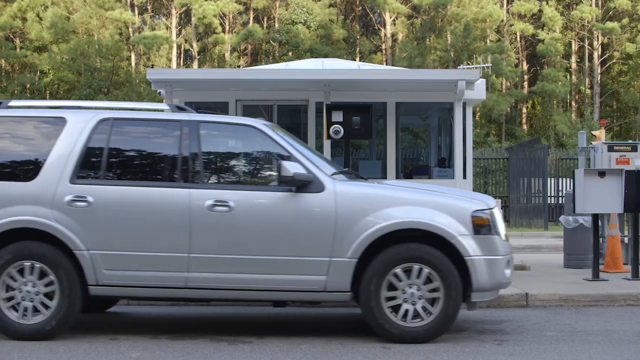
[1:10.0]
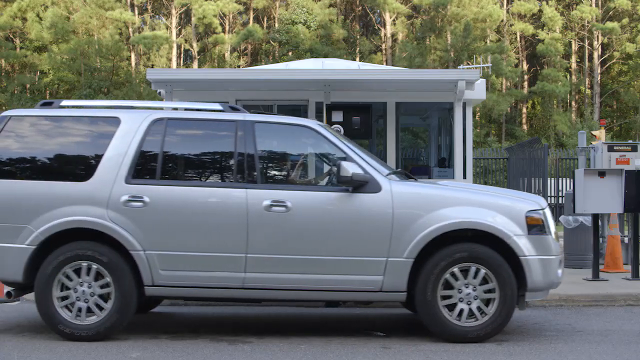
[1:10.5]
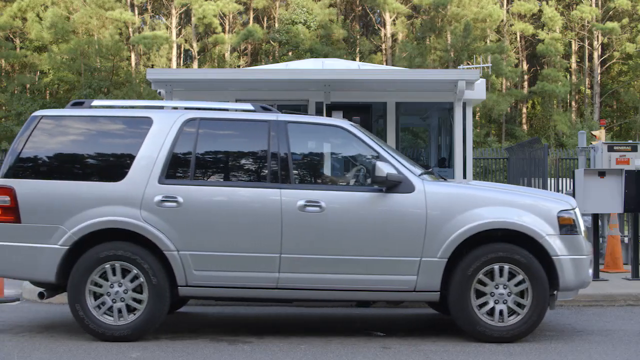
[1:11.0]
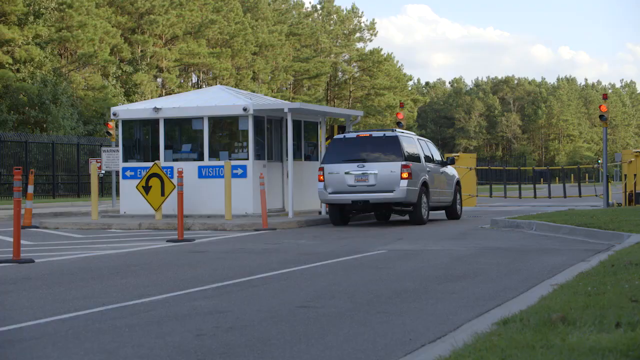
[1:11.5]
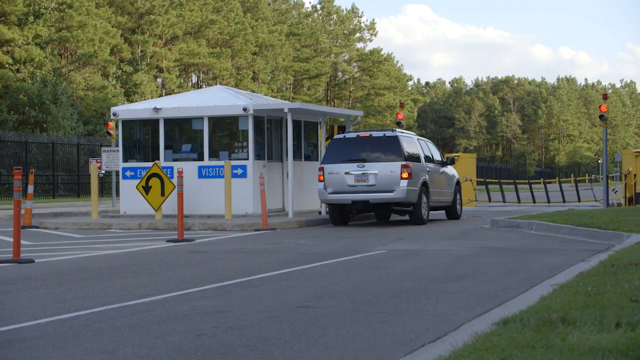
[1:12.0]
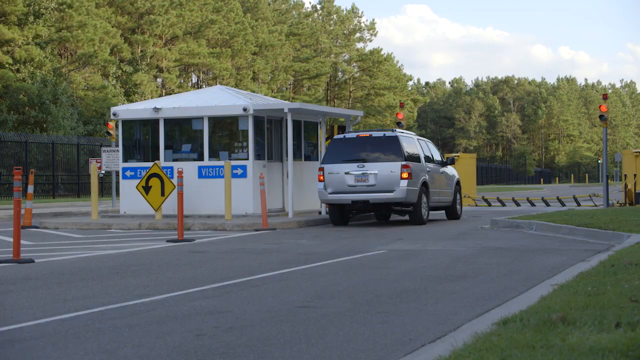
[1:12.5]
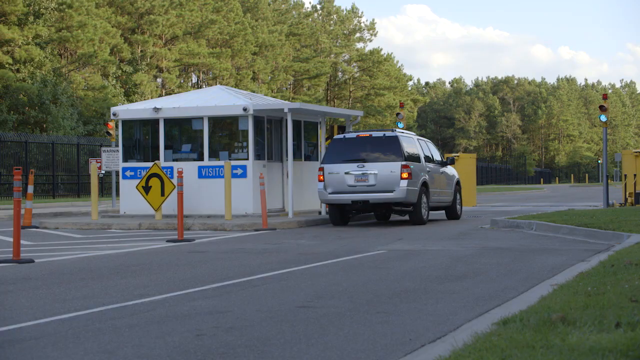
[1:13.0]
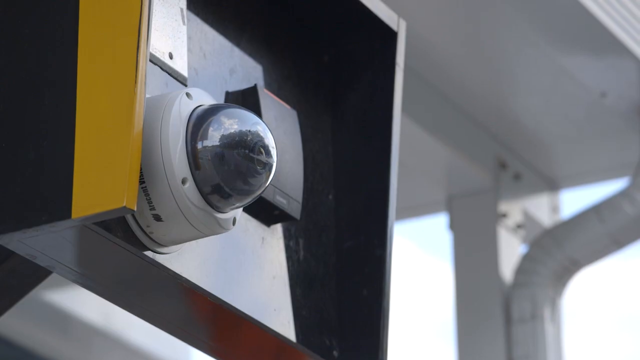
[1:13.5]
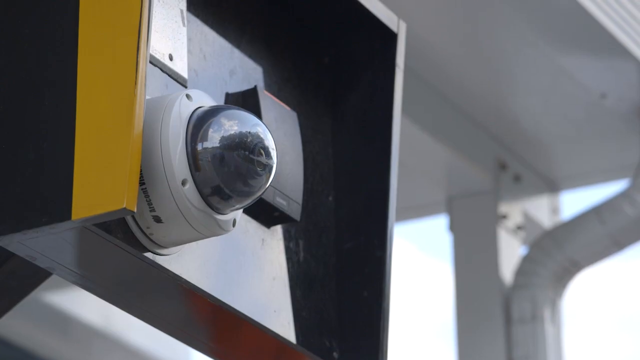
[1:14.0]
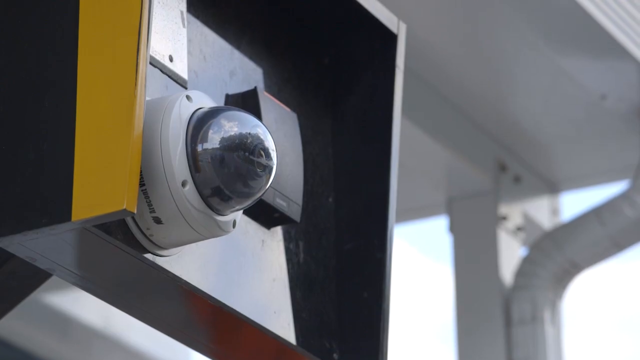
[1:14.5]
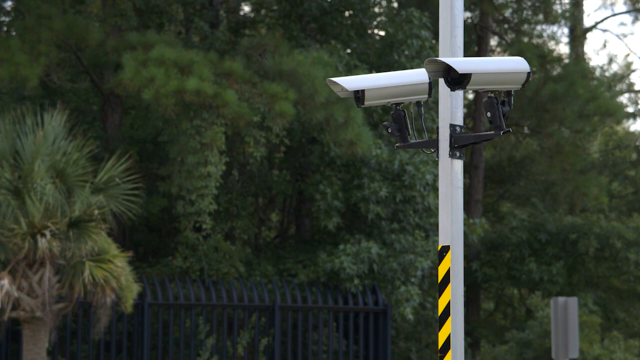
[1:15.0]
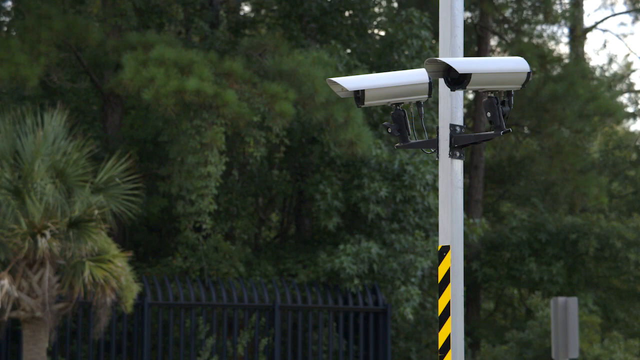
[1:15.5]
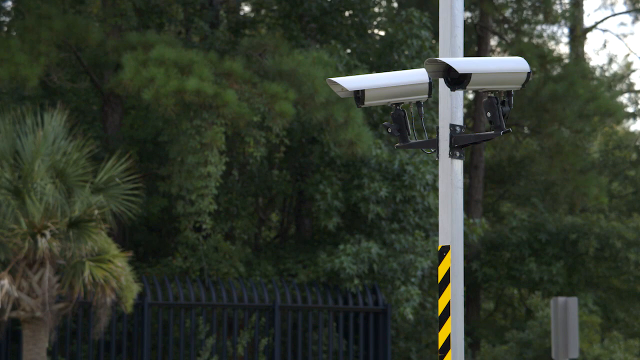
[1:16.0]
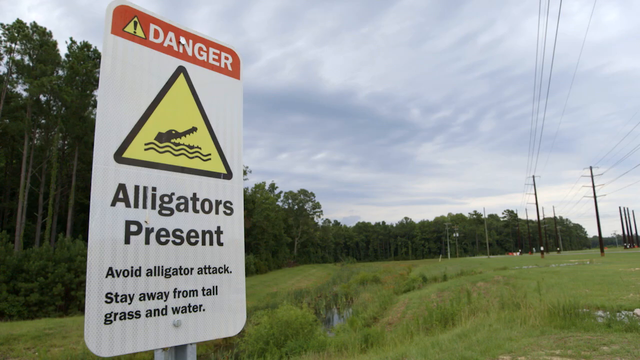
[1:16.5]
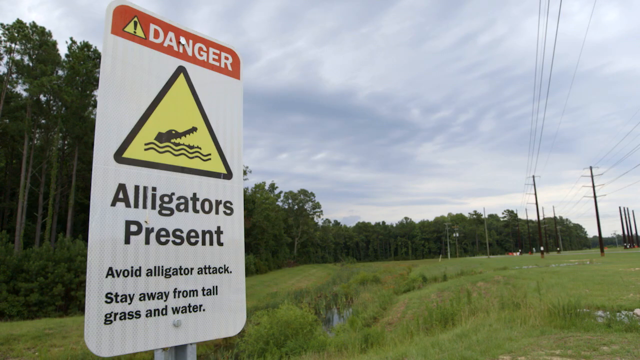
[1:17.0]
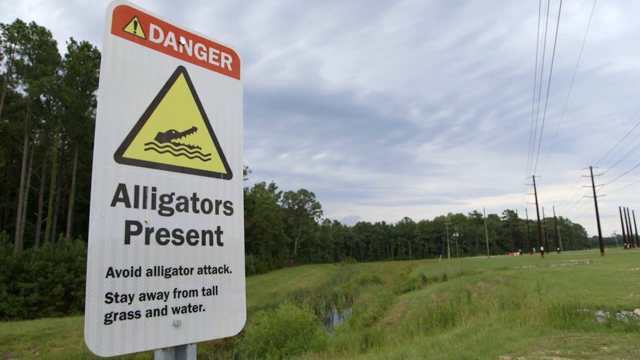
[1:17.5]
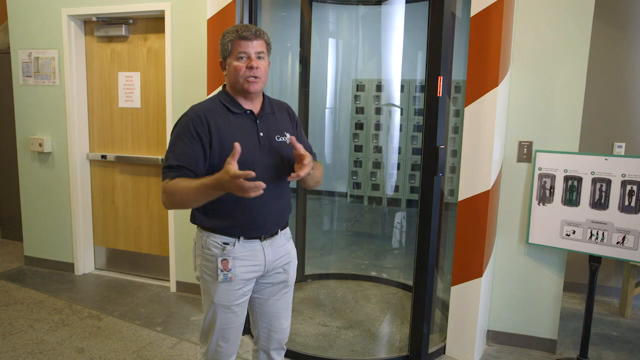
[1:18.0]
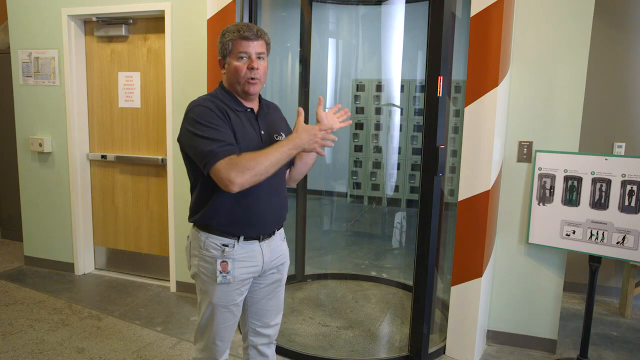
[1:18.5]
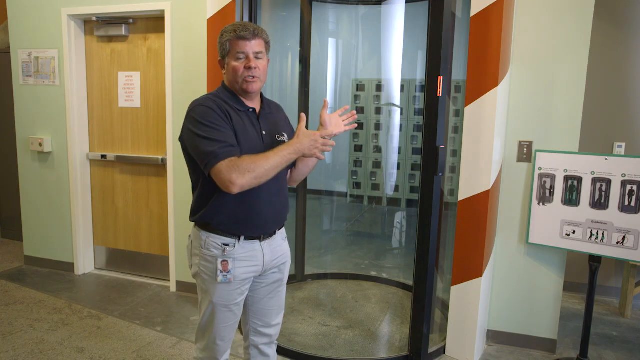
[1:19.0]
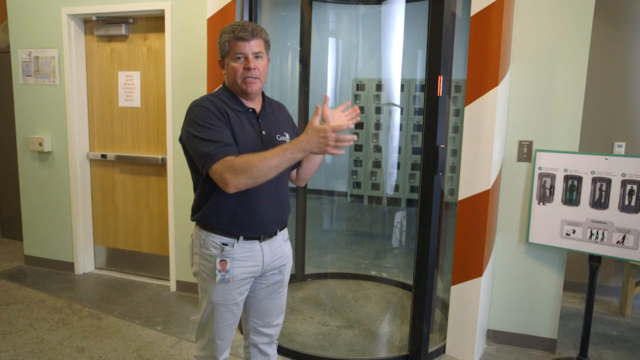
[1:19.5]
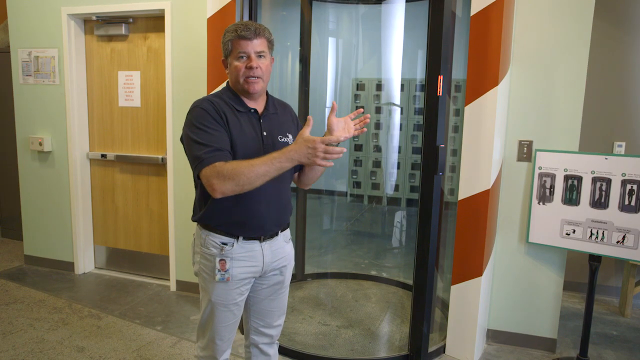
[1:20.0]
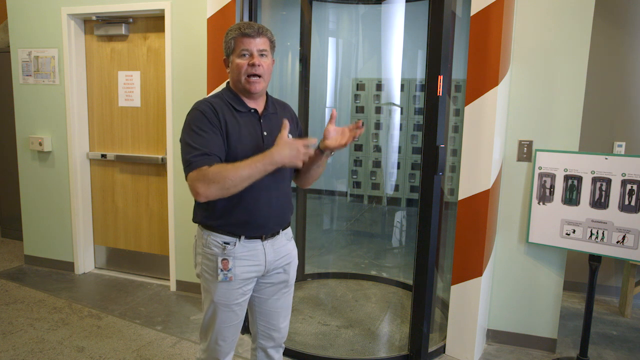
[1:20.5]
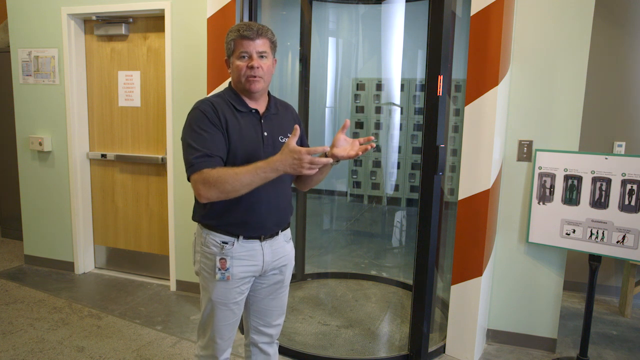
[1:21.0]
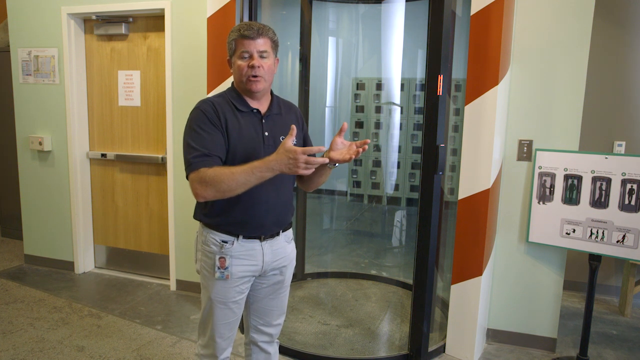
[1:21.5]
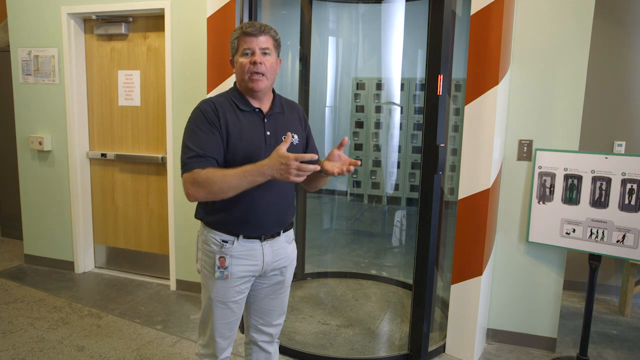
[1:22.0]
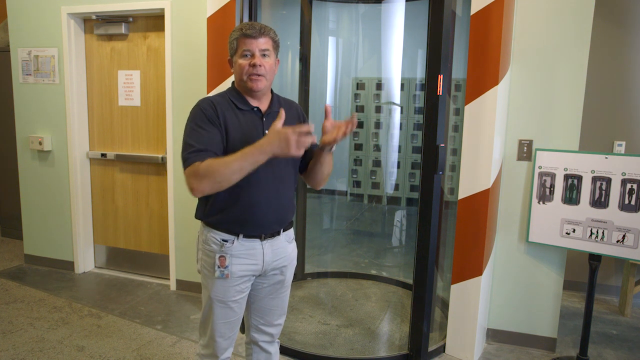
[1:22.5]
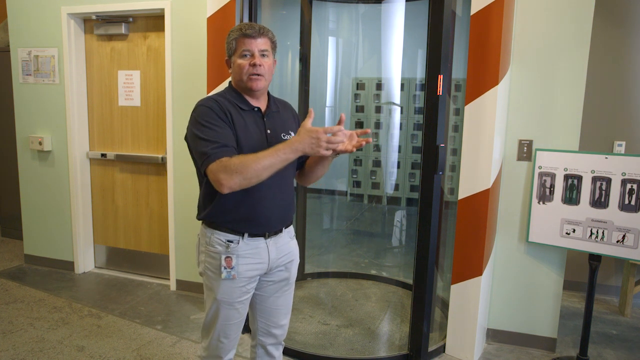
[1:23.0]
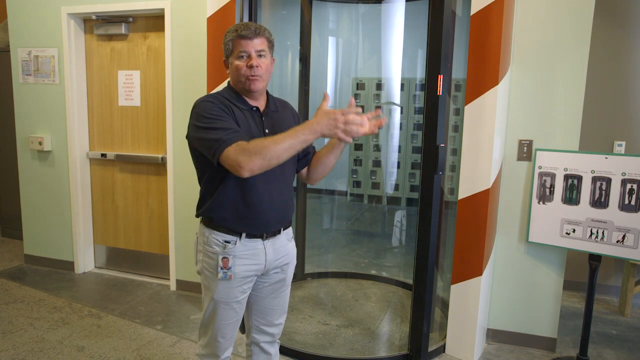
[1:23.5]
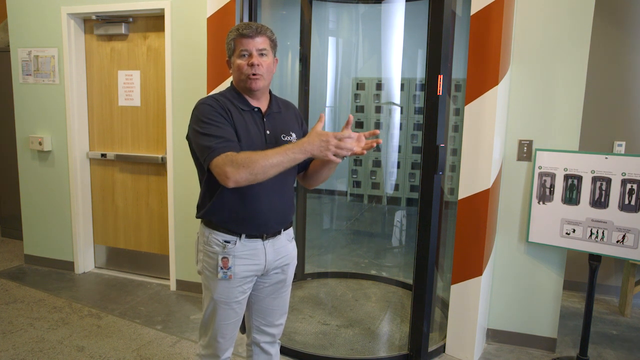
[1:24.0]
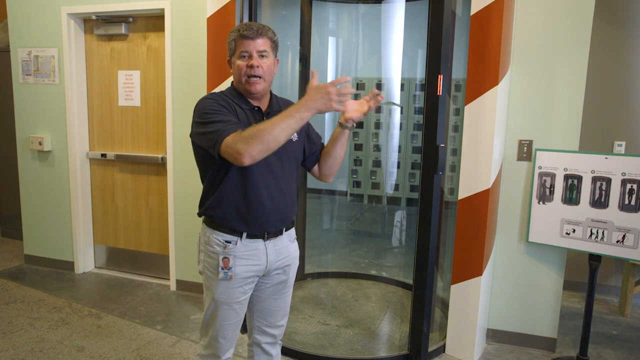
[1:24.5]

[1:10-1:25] The car goes into the high-security facility as the gate opens and cameras watch. A sign says "beware of alligators". The man stands in front of a door of some sort, gesturing toward it as he talks. There is a glass tube that someone seemingly goes inside. He talks and gestures with his hands, looks very professional, and wears his name badge.